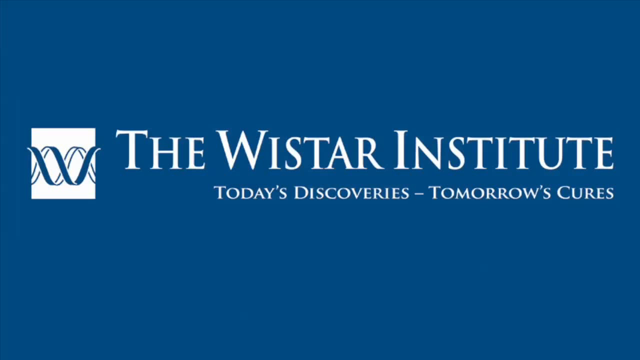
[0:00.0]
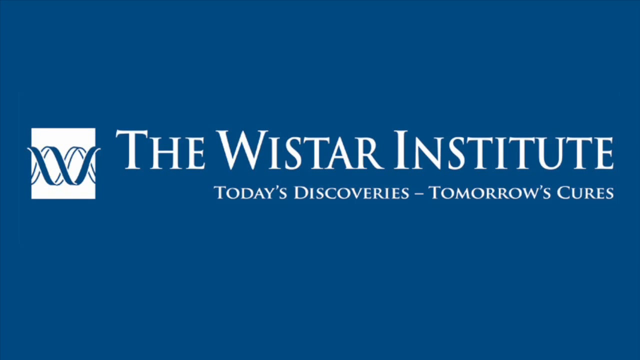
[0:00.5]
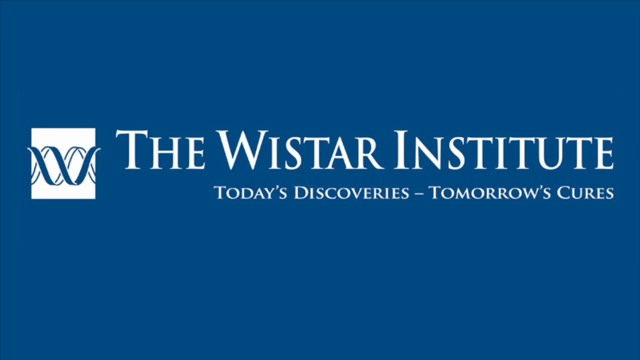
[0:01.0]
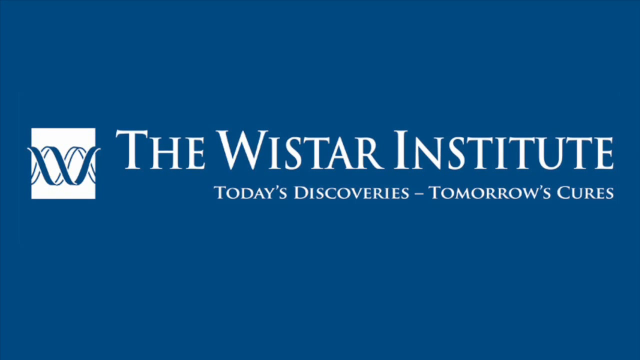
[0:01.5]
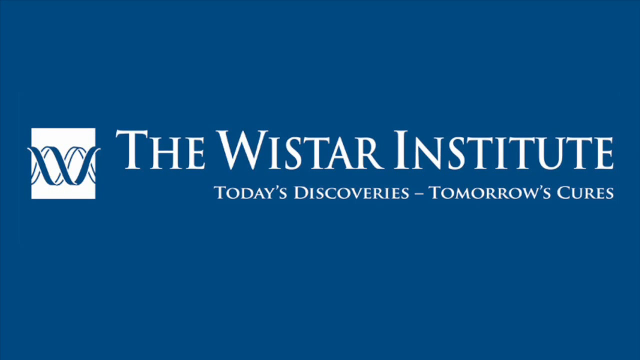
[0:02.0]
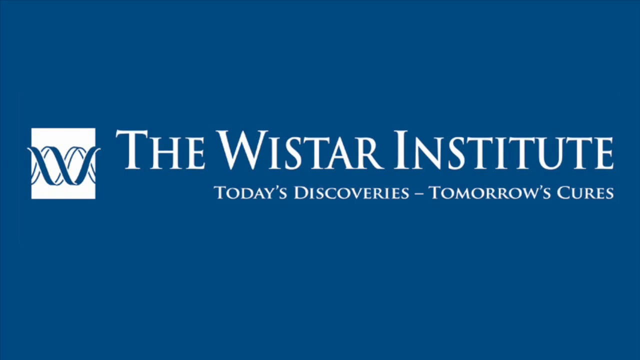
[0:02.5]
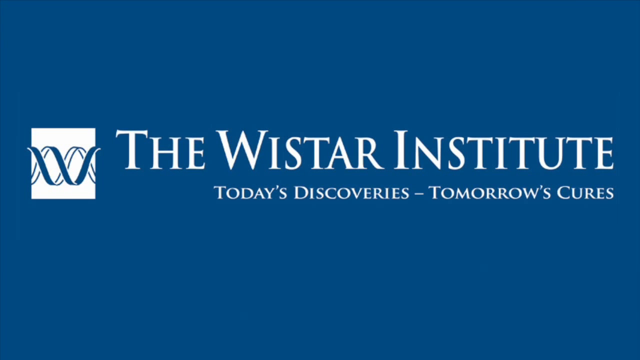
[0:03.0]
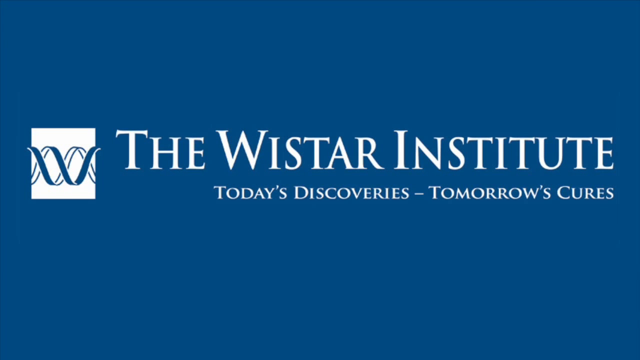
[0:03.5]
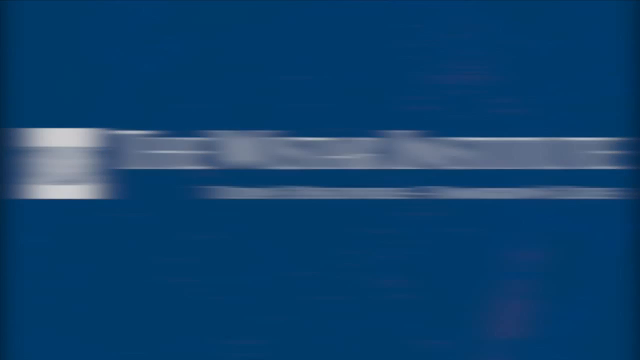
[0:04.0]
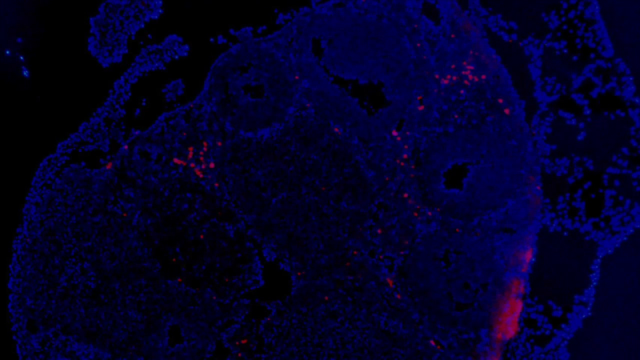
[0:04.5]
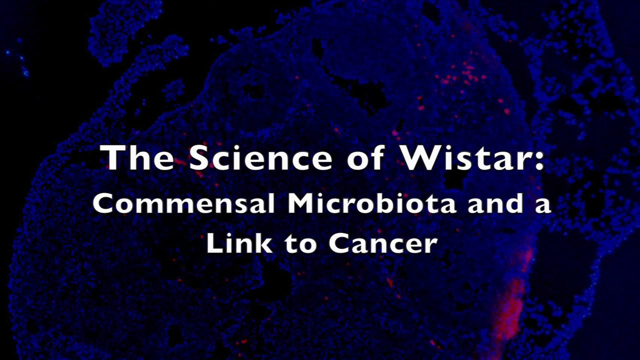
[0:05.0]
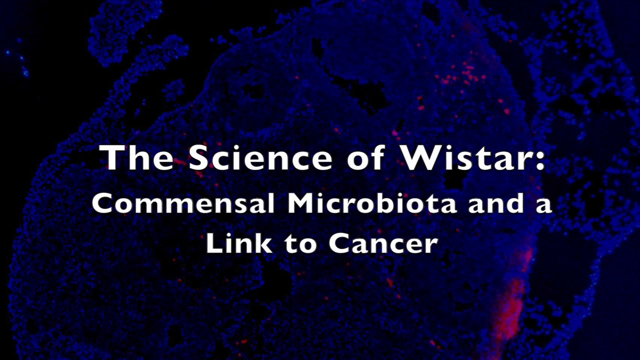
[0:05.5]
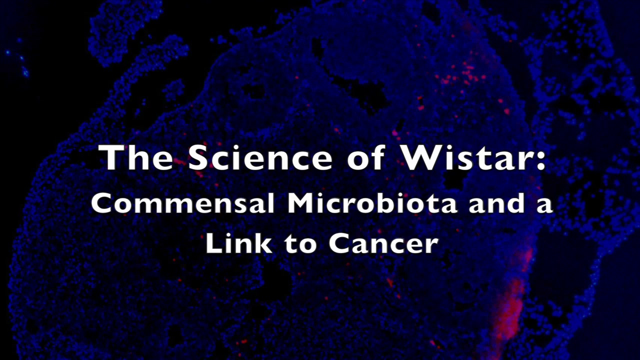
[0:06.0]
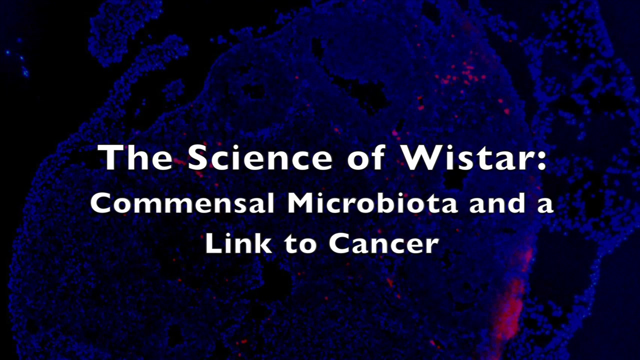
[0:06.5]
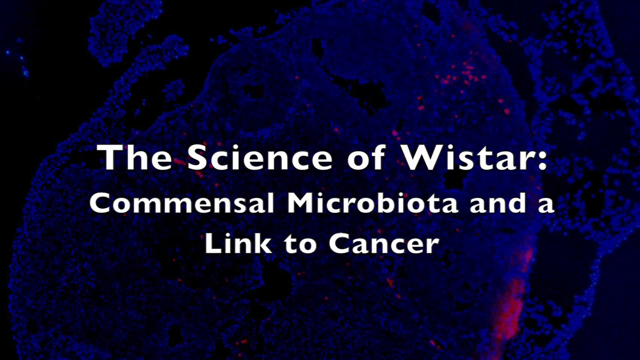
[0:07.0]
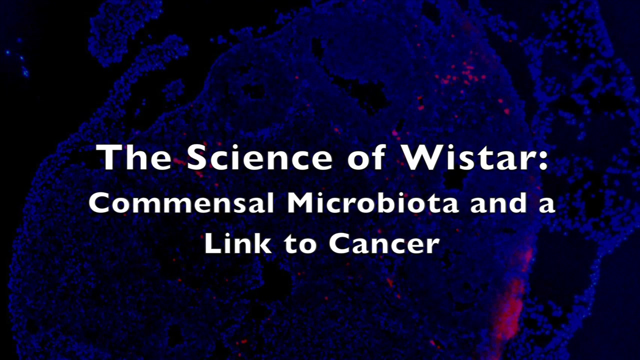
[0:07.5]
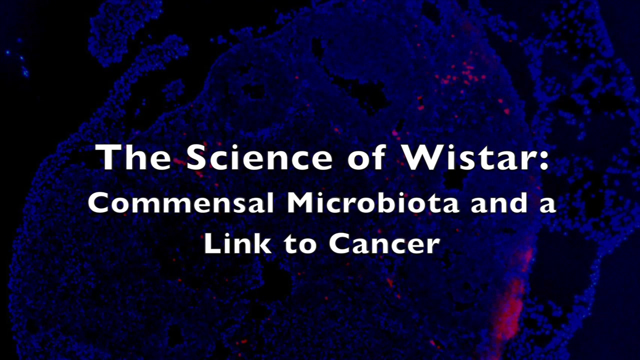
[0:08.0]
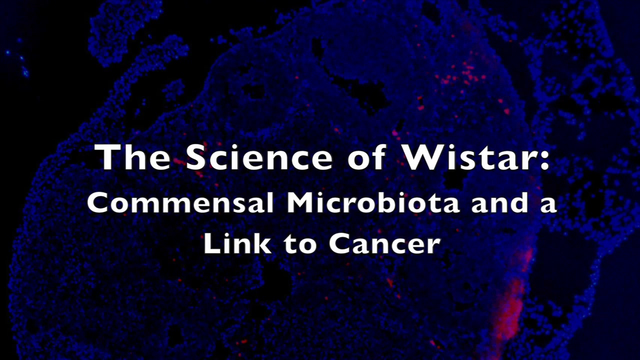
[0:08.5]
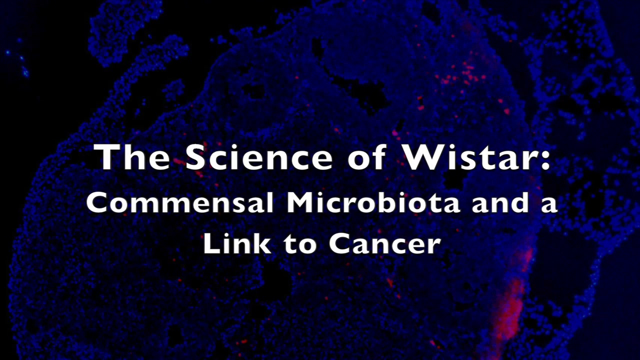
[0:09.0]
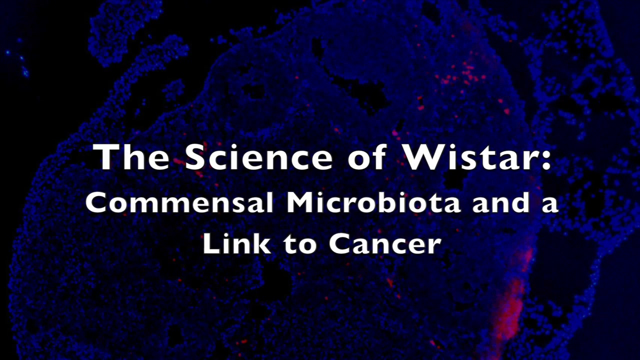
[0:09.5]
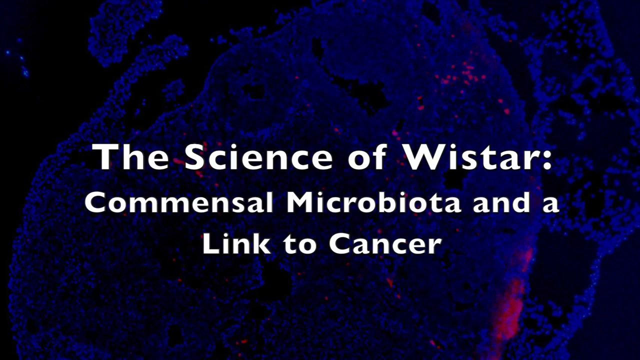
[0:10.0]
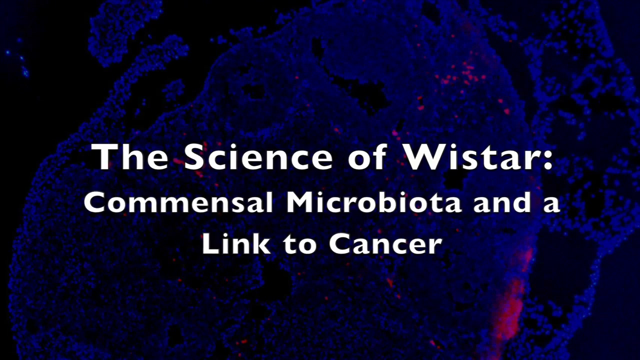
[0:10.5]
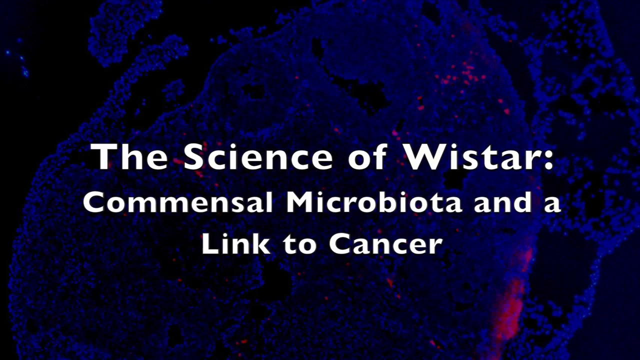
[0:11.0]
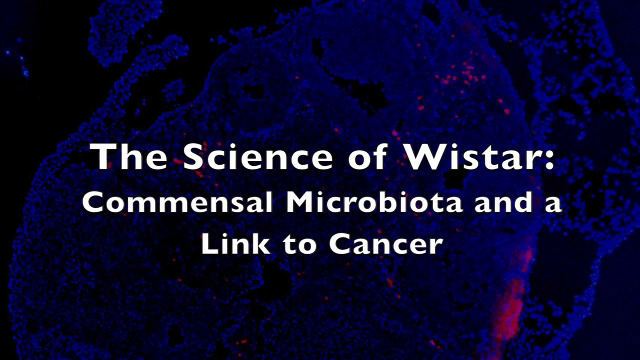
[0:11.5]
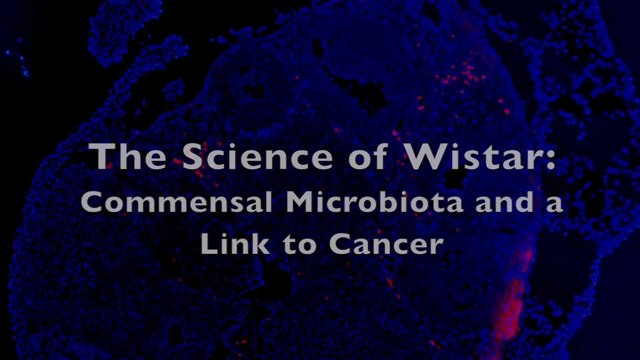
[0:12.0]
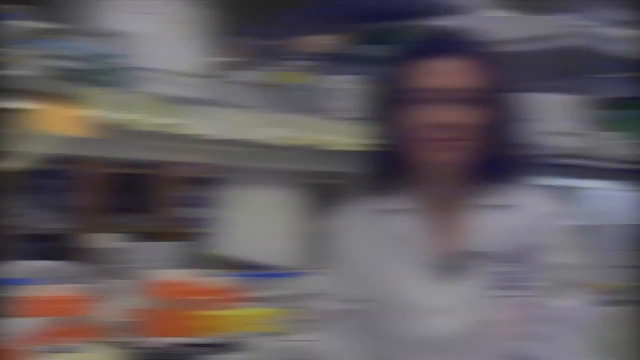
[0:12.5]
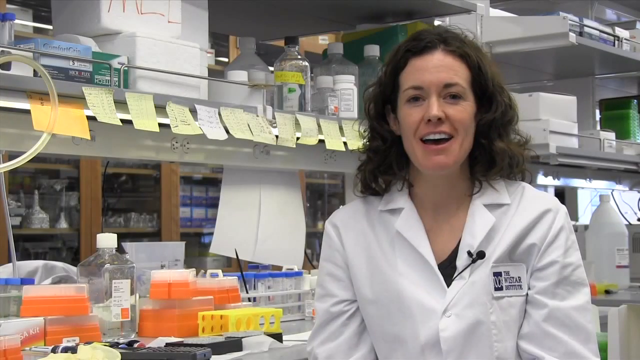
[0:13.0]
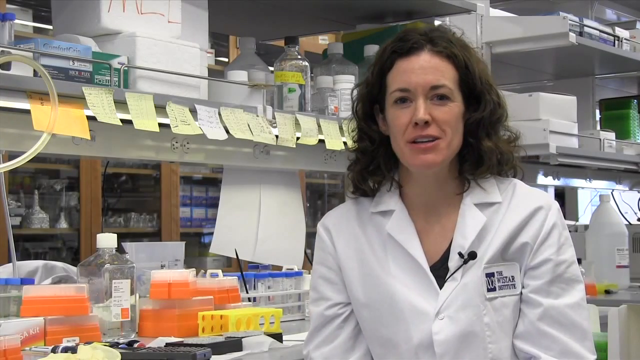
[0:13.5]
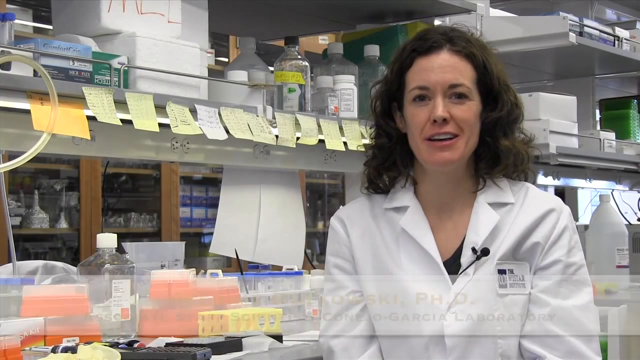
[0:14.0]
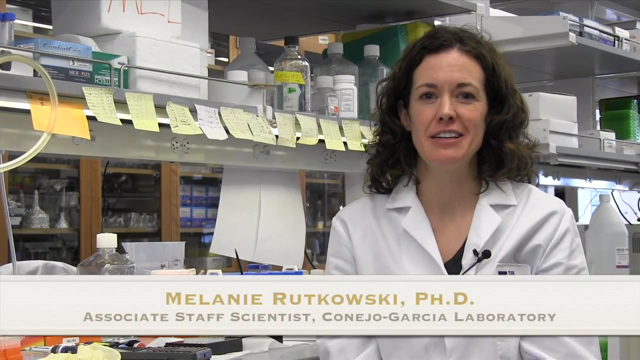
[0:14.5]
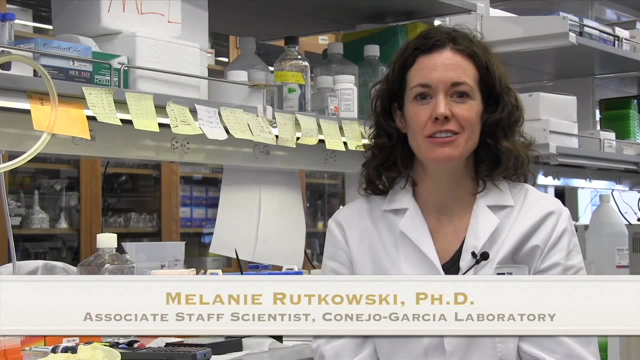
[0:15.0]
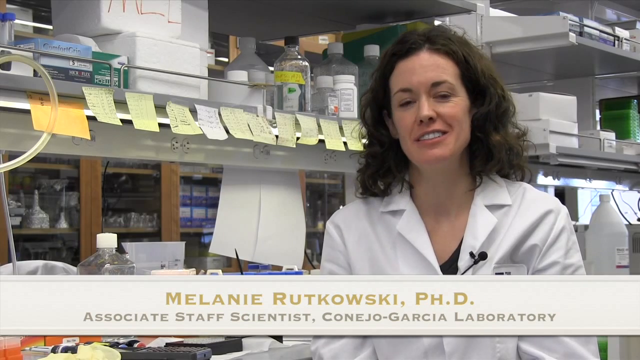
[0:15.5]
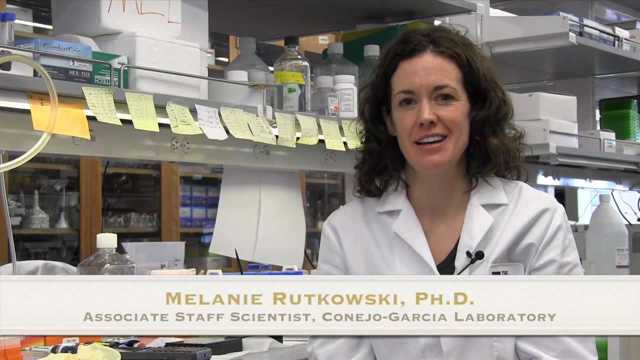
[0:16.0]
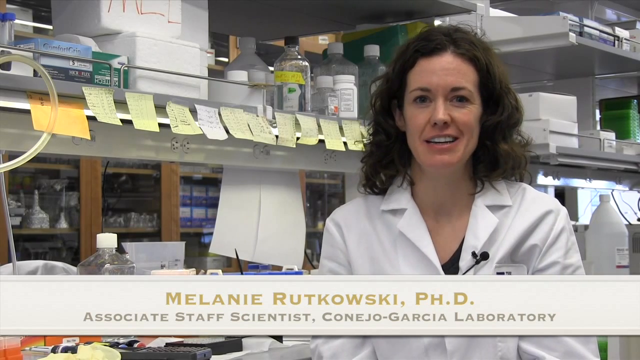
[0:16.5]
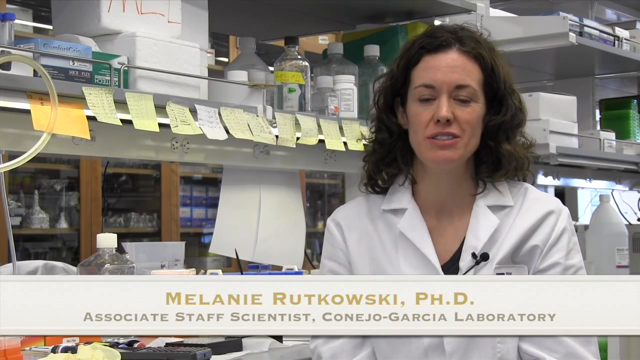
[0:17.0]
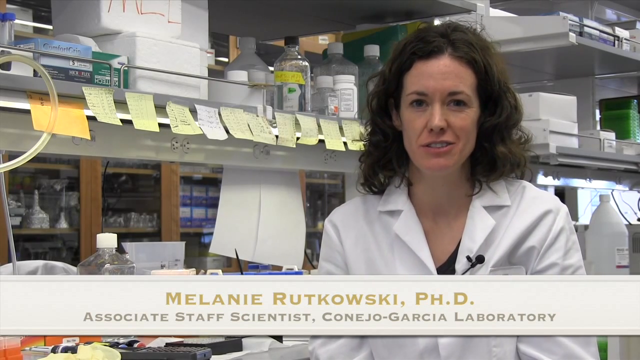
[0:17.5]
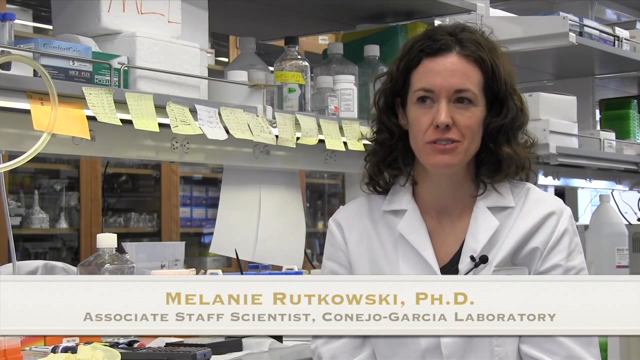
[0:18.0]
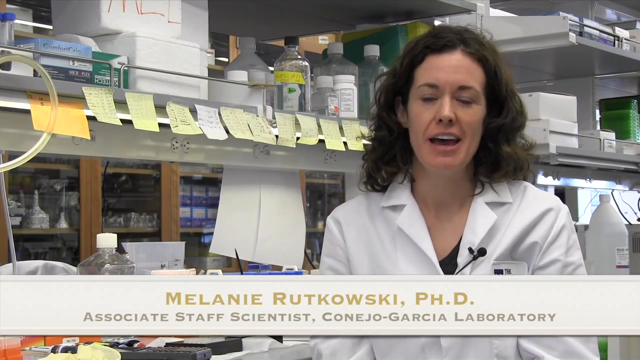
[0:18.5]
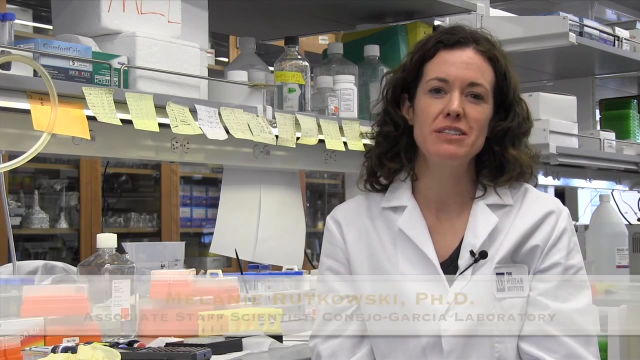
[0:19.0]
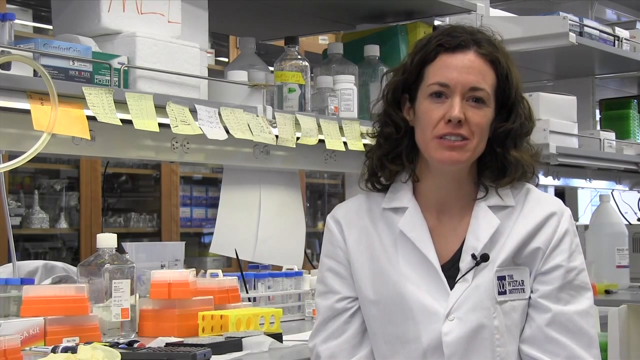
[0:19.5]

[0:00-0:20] The video opens with a still illustration or logo popping up on a darker, bluish-gray background. White serif text in all caps, with the first letter of each word an even larger capital, reads "The Wistar Institute." Underneath, in small text in the same all-caps style with larger first letters, it reads "Today's Discoveries - Tomorrow's Cures." To the left of the text is a white square with a helix-looking graphic in blue and white running across it. The scene then switches to an all-black background with some luminescent purple and a scattering of bright pink illuminated splotches or dots. White sans serif text, with the first letter of each word capitalized, slowly comes toward the viewer and reads "The Science of Wistar, Commensal Microbiota and a Link to Cancer." The video then cuts to a woman talking in what looks like a lab area.